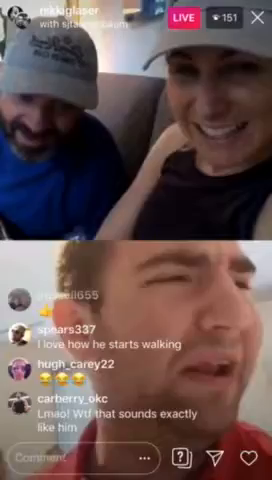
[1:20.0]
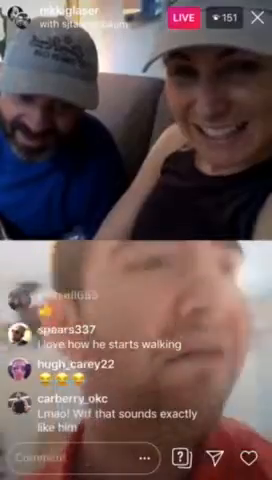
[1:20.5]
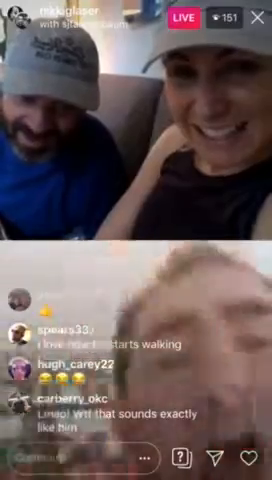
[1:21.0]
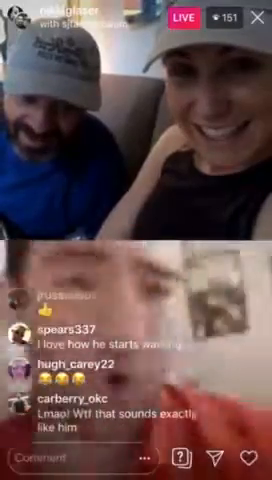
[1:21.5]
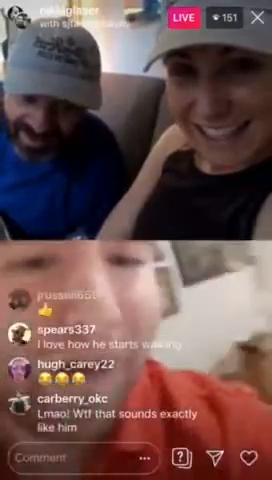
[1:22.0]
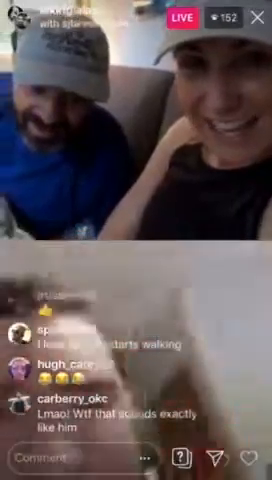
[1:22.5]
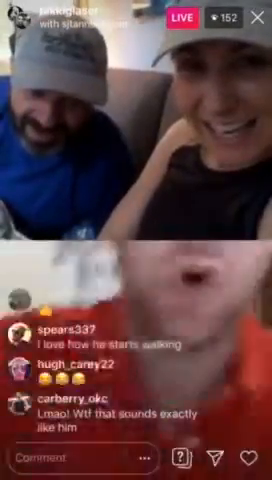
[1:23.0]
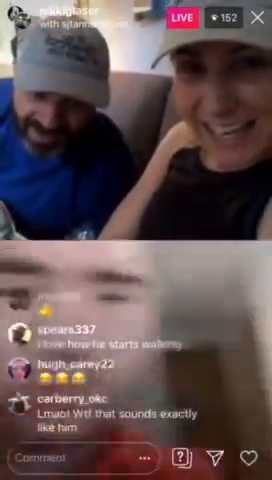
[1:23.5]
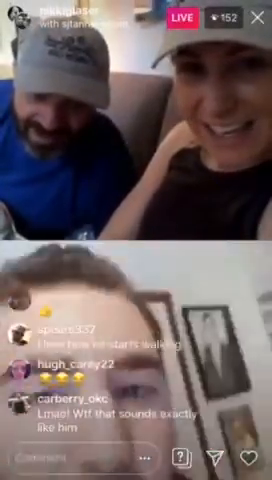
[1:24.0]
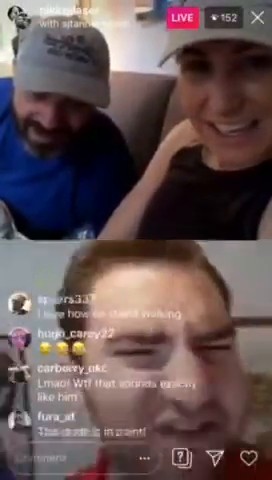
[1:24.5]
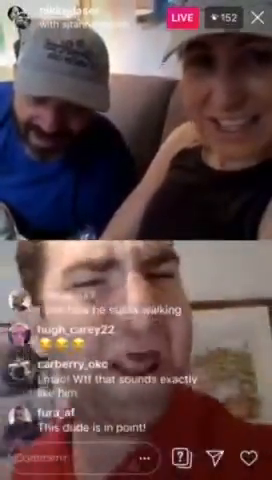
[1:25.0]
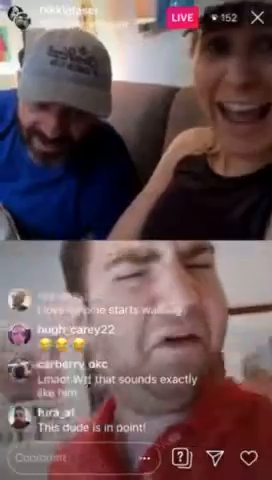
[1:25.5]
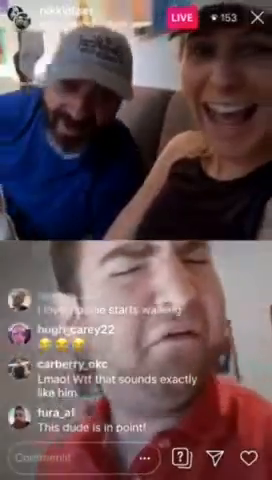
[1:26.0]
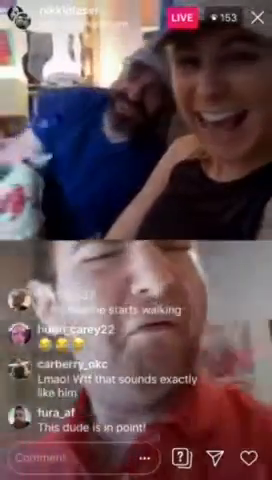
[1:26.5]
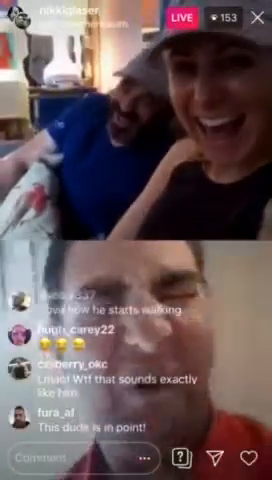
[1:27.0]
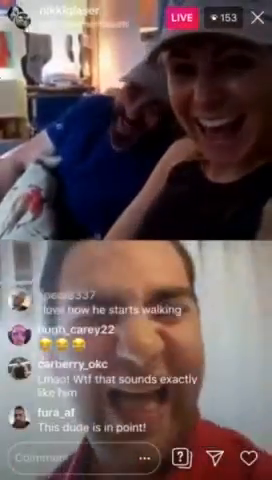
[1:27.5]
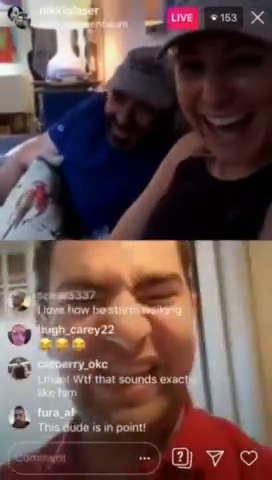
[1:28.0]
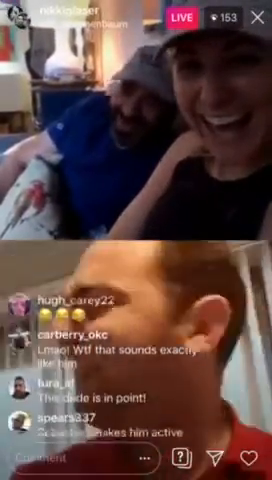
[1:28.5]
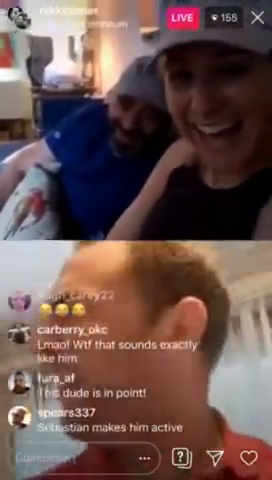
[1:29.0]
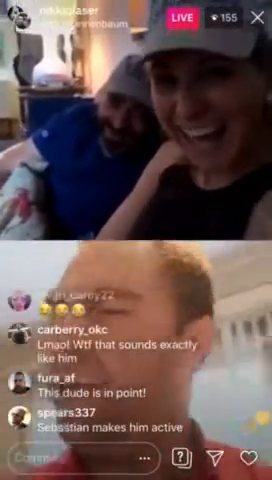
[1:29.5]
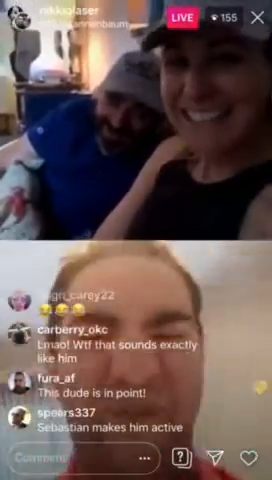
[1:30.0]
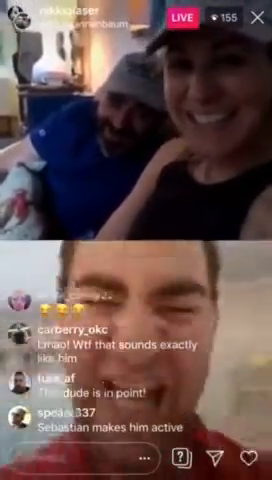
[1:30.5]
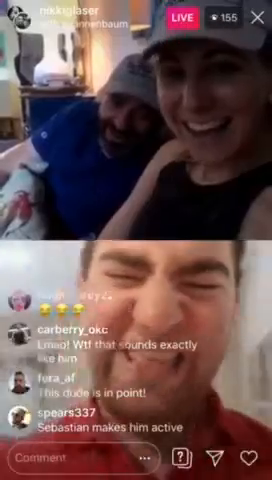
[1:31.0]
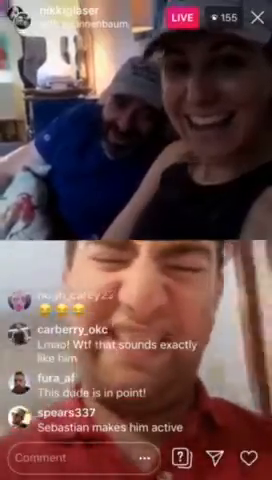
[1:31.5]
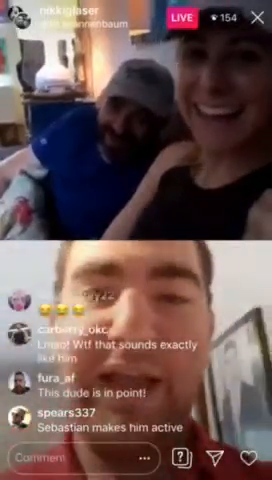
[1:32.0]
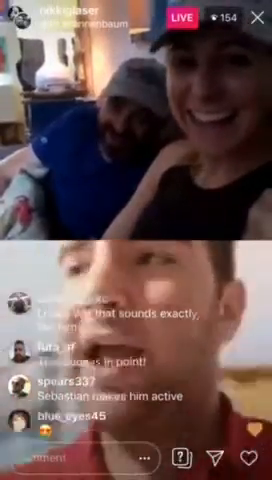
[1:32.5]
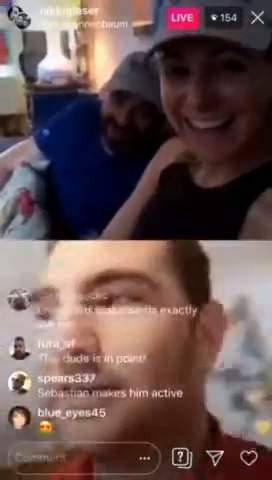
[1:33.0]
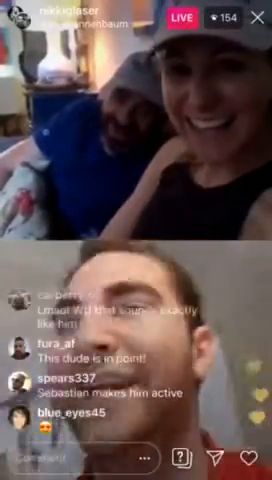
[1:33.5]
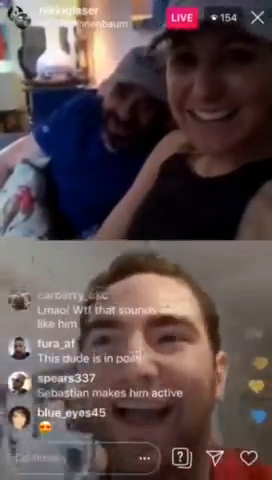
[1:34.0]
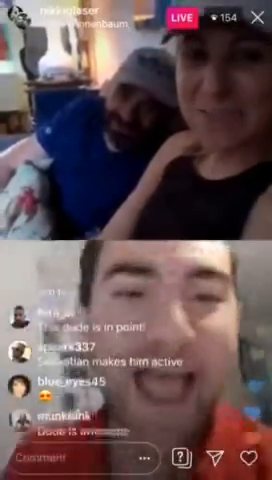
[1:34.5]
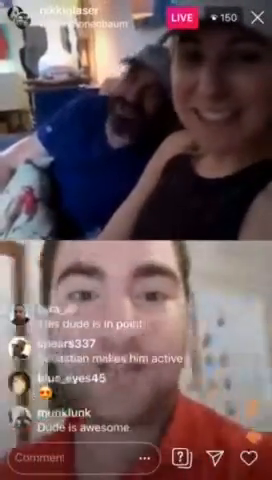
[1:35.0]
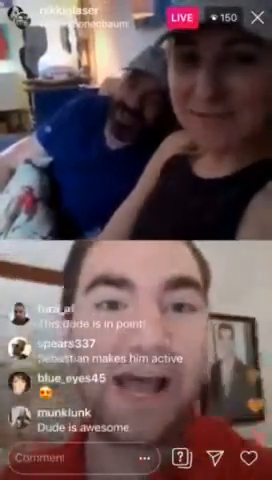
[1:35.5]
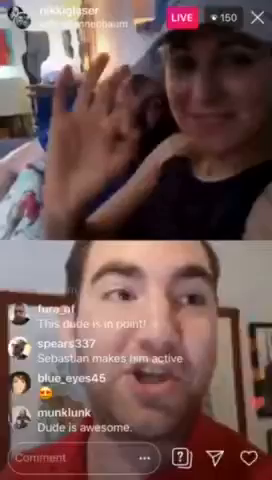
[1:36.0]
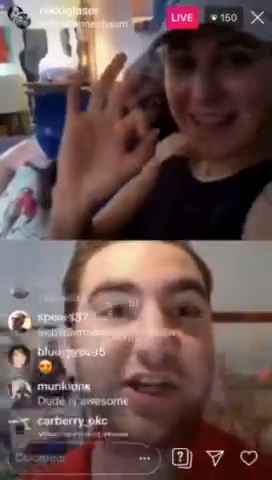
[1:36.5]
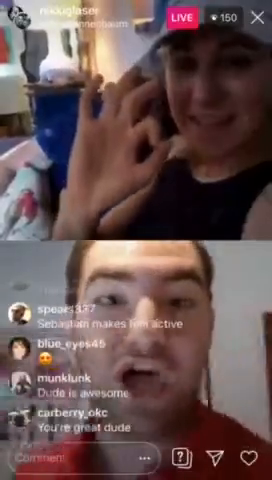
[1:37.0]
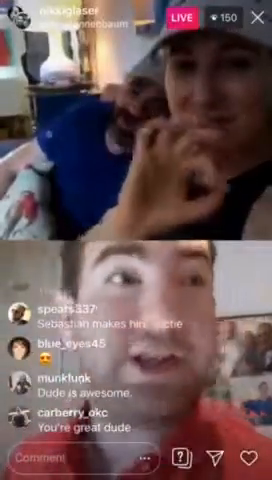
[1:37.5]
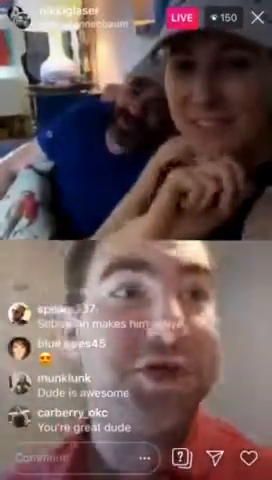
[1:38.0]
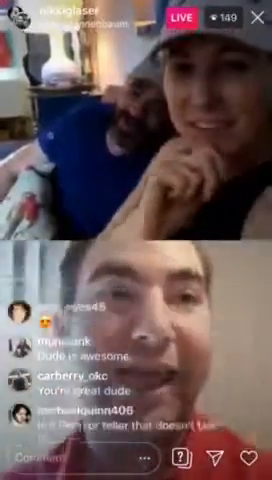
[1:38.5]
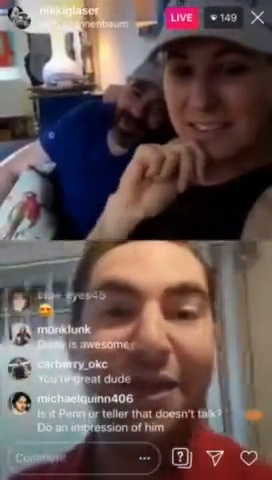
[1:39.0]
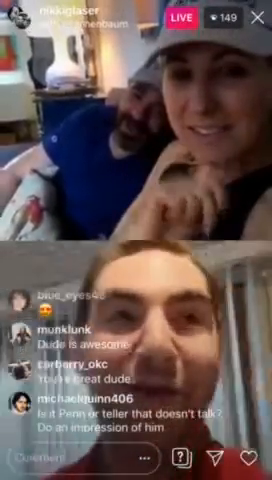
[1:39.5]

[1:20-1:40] The live stream is split top and bottom, with various icons across the bottom edge and, on the left above them, profile pictures and names with messages scrolling up as people chat. Along the top edge are icons showing the current viewer count, a red one showing the video is live, and another indicating it is being streamed by Nikki Glaser. In the top half, a man and a woman sit on a couch, the woman closest to the camera and the man next to her leaning forward closer to the camera; both are smiling. In the bottom half, a man makes a disgusted face while speaking to the camera, the camera shaking quite a bit as he walks around the building he is in. The man and the woman laugh. Their camera rotates a bit, showing a desk with a computer behind them. The man in the bottom continues moving about the building, and the woman then makes an OK gesture with her hand.